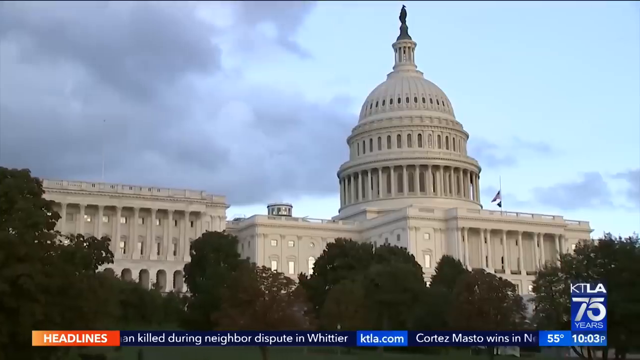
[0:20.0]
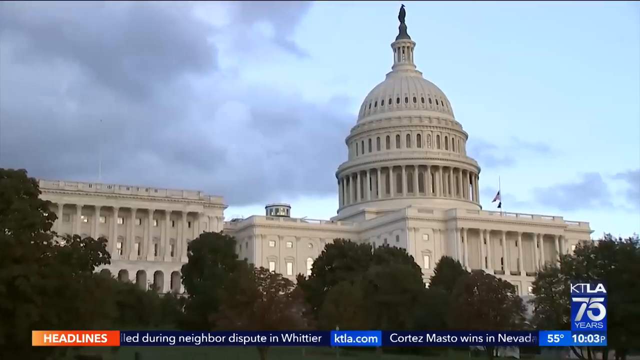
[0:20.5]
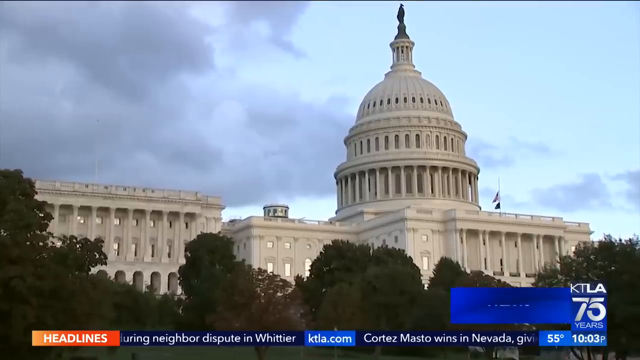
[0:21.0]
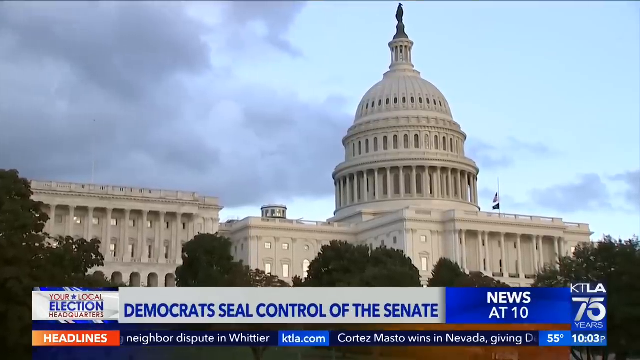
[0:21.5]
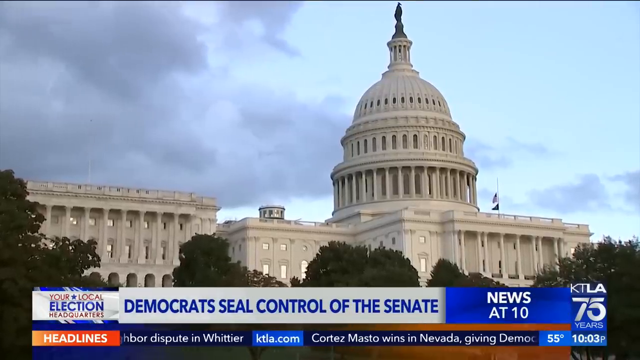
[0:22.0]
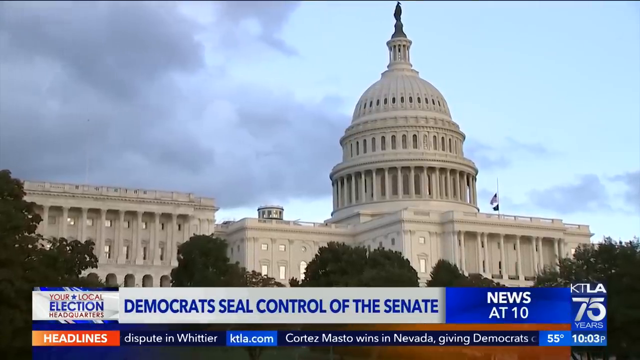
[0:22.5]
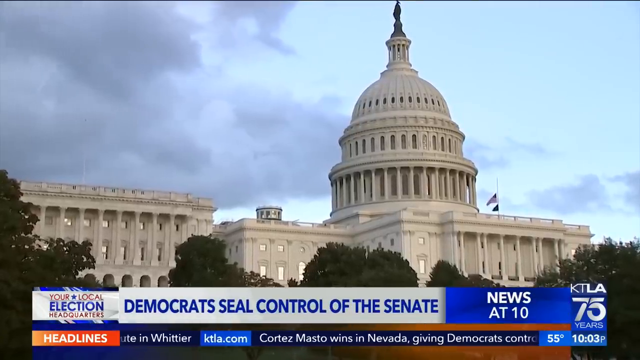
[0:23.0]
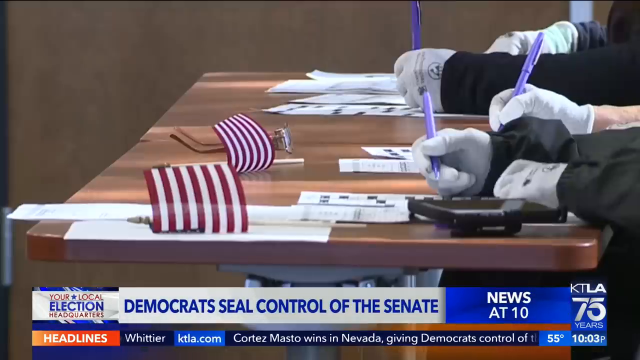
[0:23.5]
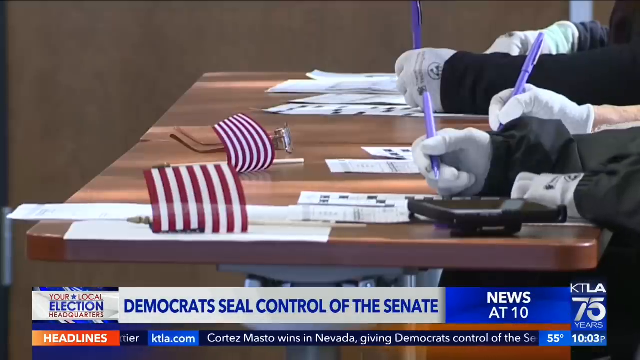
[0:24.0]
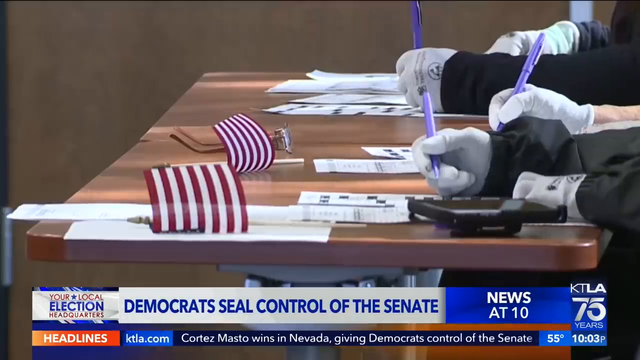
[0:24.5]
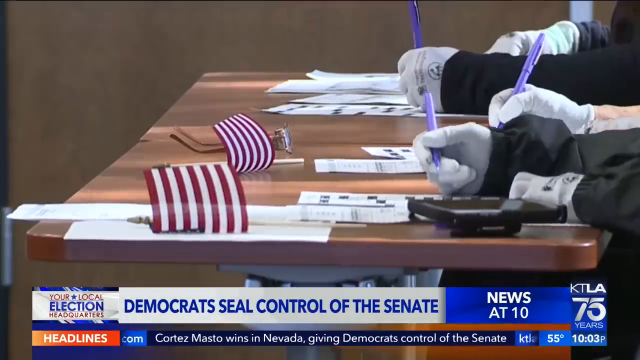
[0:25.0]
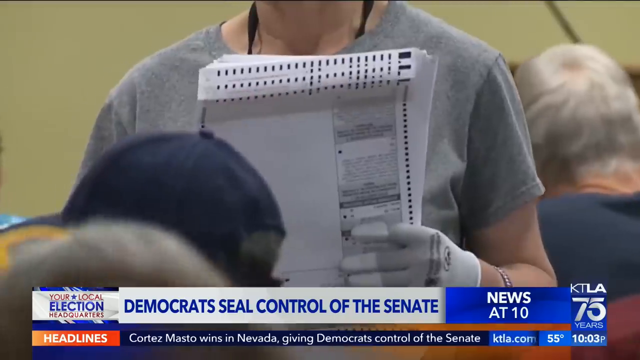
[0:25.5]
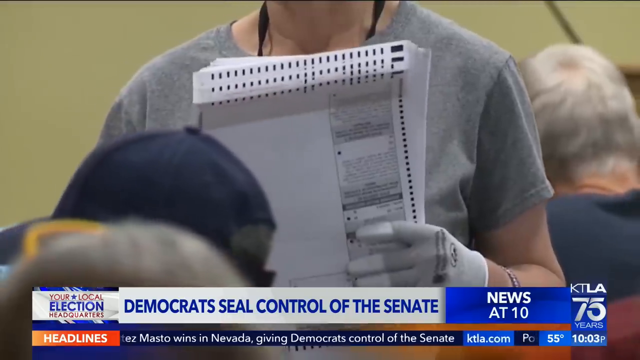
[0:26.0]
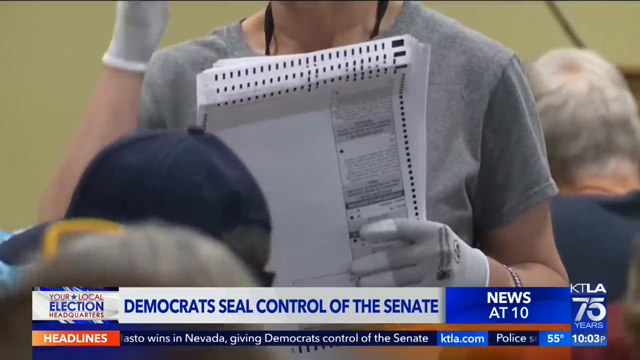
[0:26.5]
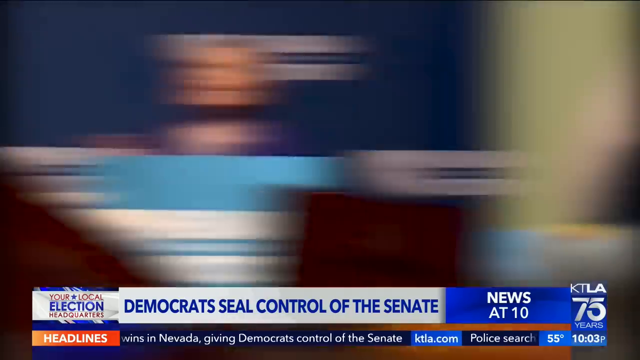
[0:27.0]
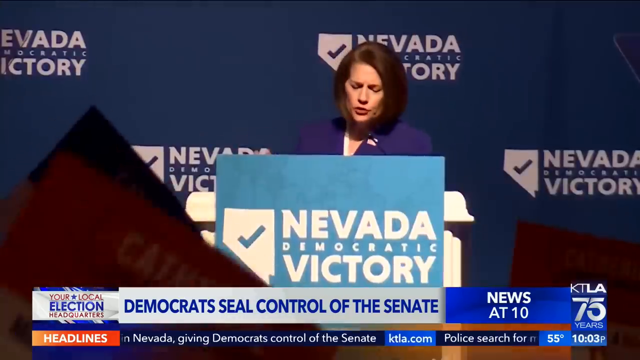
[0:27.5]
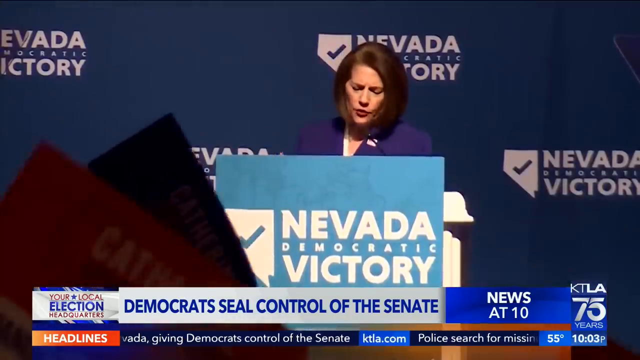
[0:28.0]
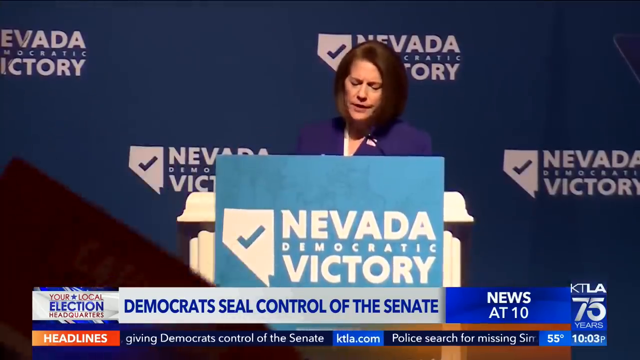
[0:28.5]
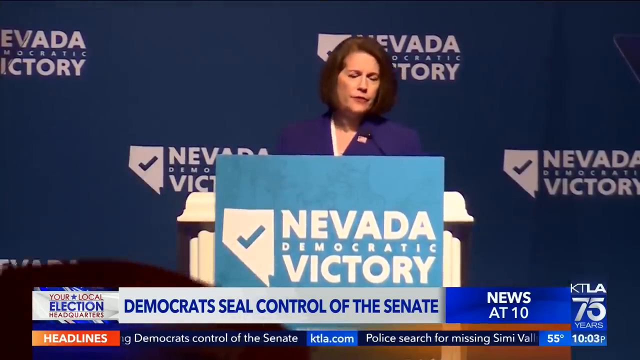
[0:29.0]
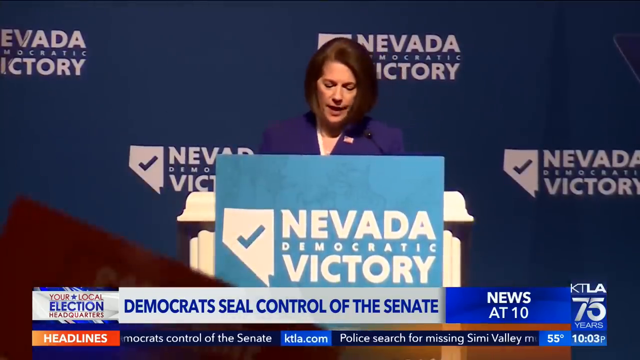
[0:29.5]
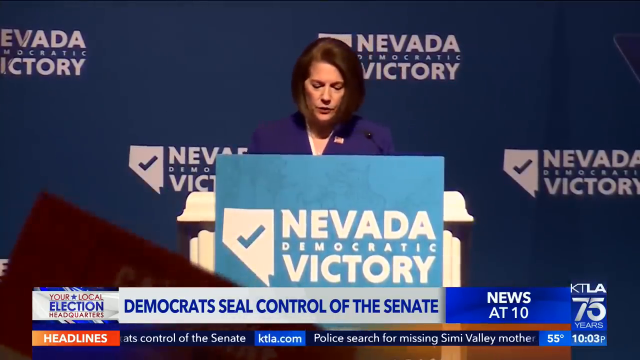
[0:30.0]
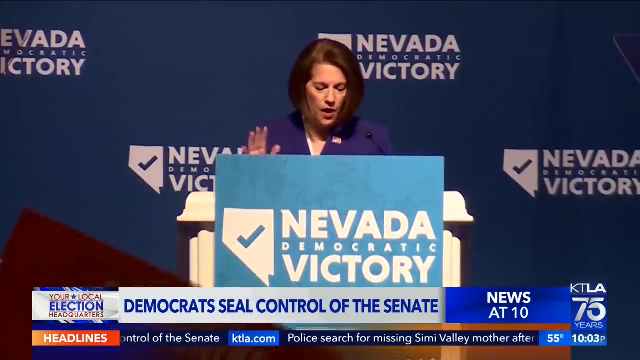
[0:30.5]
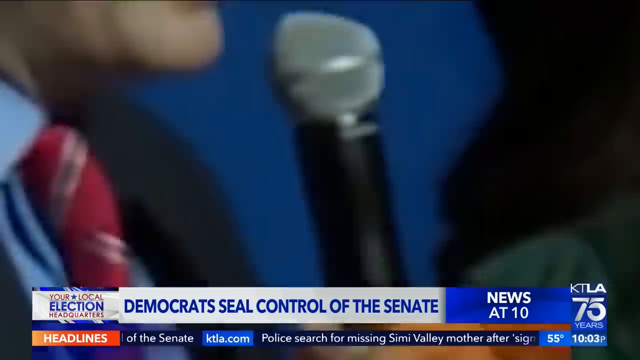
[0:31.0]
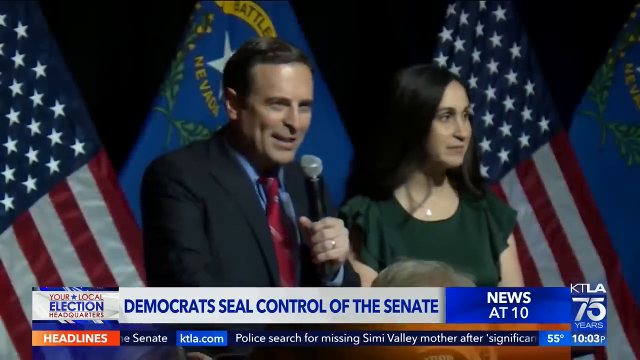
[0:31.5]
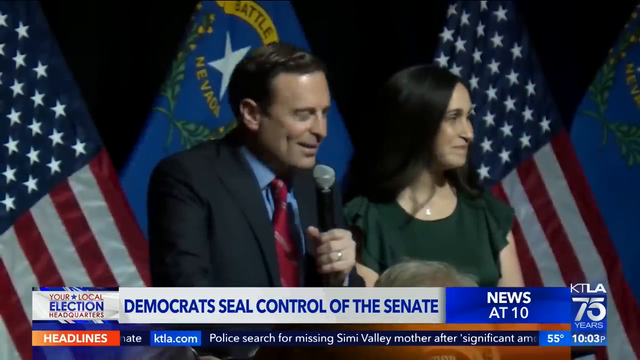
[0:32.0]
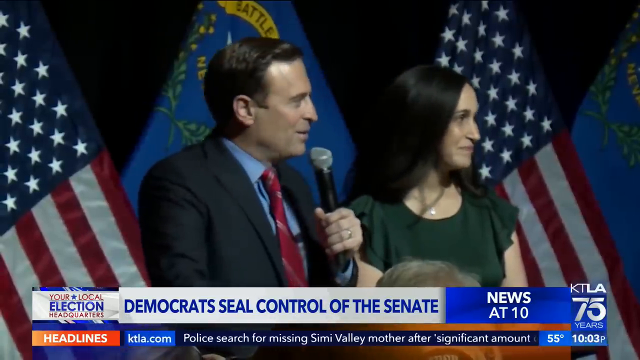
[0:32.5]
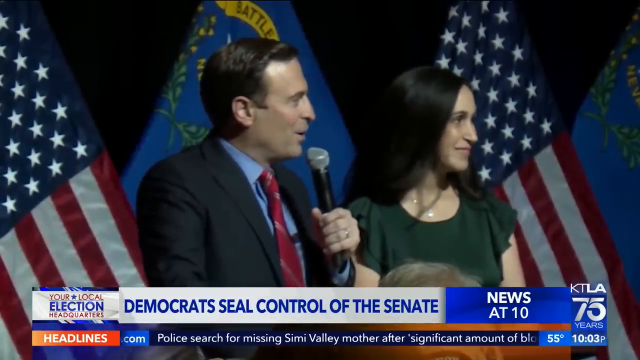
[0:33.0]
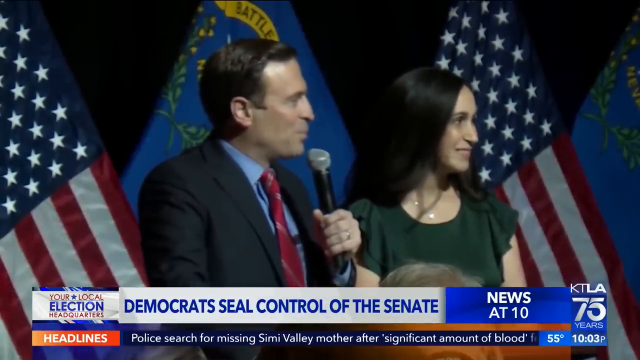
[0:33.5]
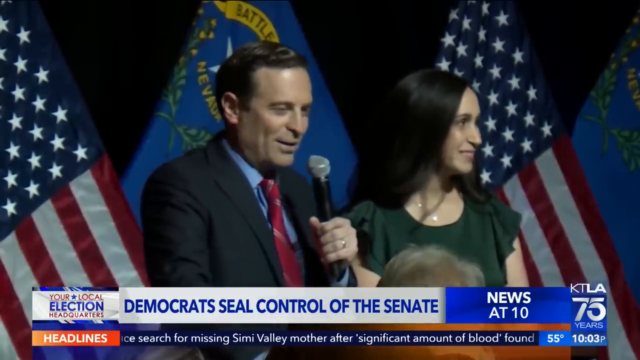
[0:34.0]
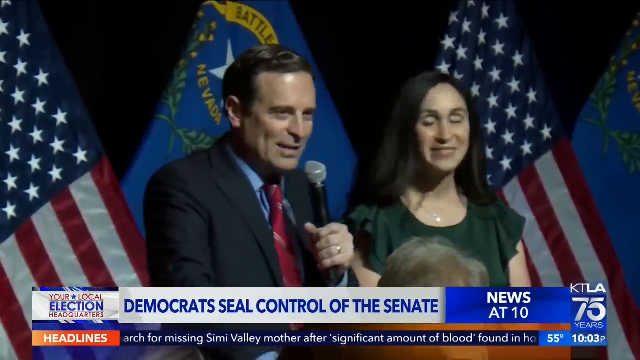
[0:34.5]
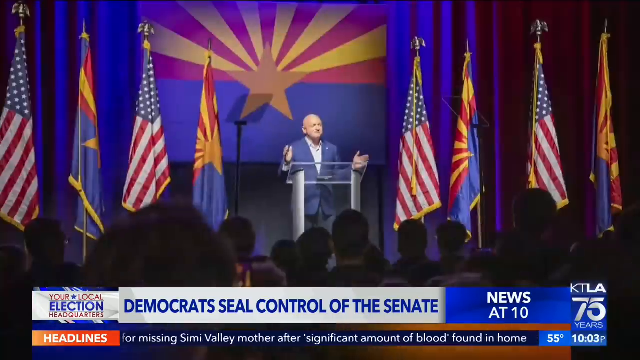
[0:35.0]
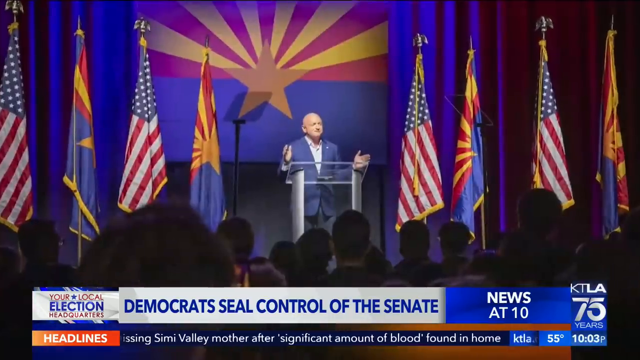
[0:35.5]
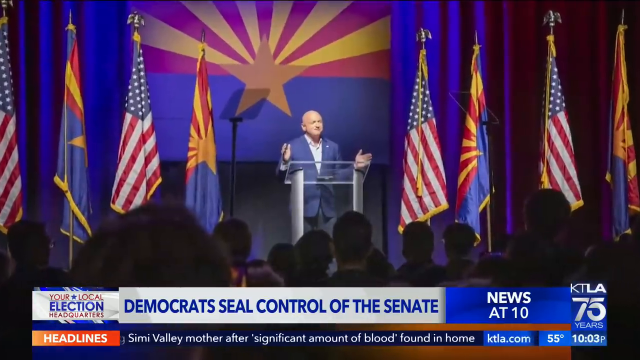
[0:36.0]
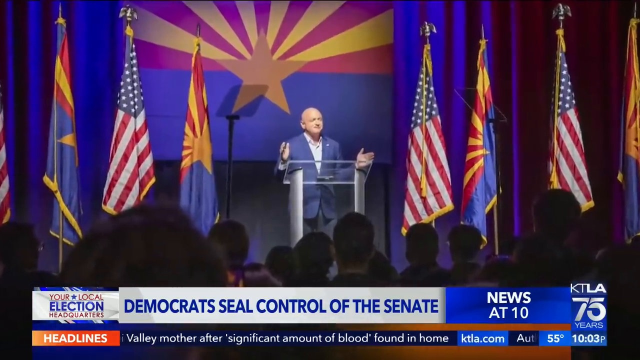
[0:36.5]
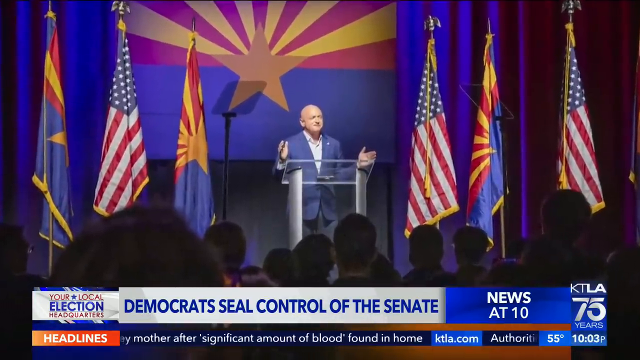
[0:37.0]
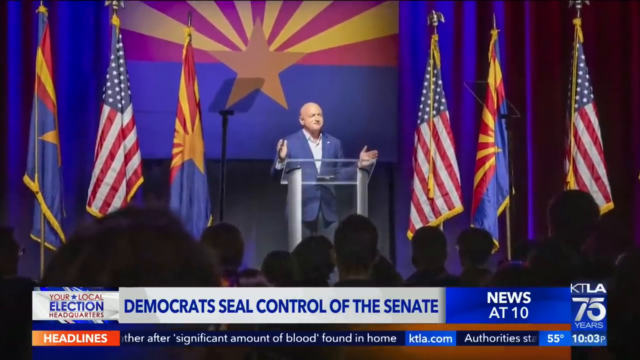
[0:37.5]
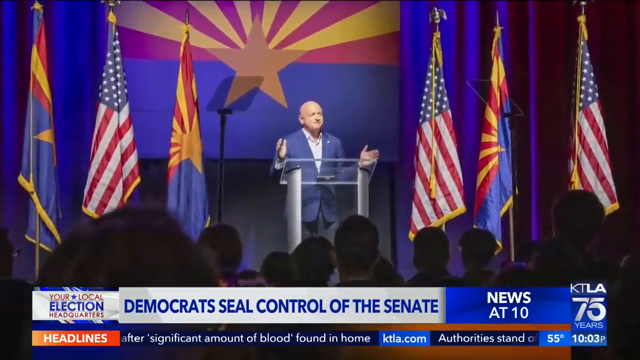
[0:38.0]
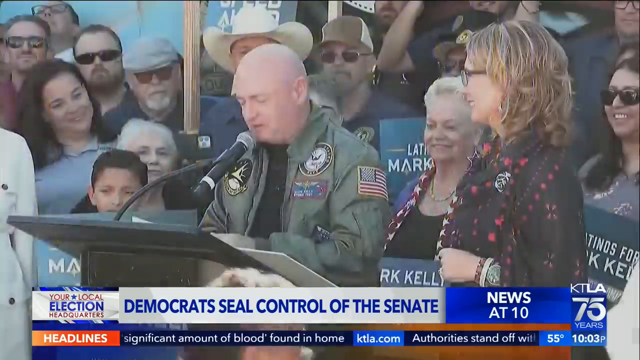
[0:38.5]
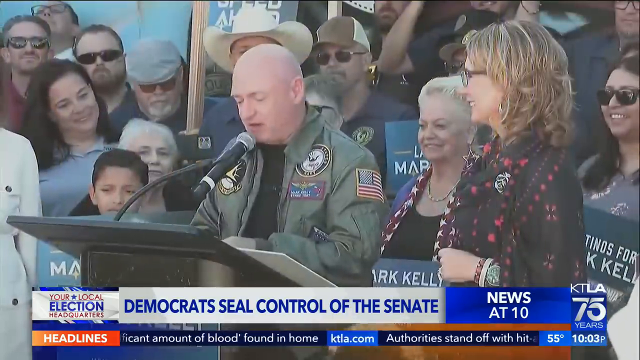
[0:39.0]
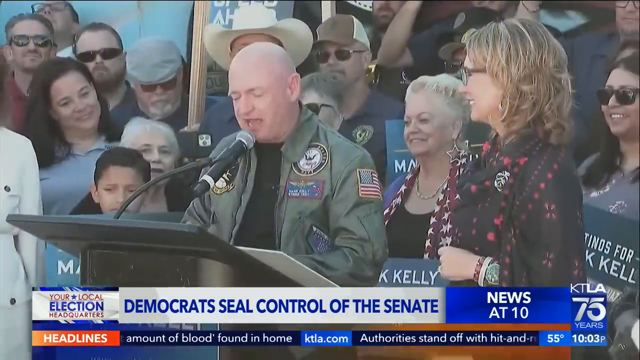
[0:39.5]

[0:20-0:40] A different screen from the same station, KTLA-75, probably covers the same election. A blurb across the bottom reads "Democrats seal control of Senate". There is an image of Mark Kelly, the senator from Arizona, and images of other people, presumably politicians. Mark Kelly appears next to his wife, Gabby Giffords. An image shows what looks like a poll worker counting or at least holding ballots. Something from Nevada follows, with someone speaking from a podium; the images go by quickly. Mark Kelly speaks in front of a podium before a crowd. A Nevada Democratic victory follows, with a woman speaking behind a podium, presumably having won. Then an unidentified man, who looks vaguely familiar, stands next to a woman.